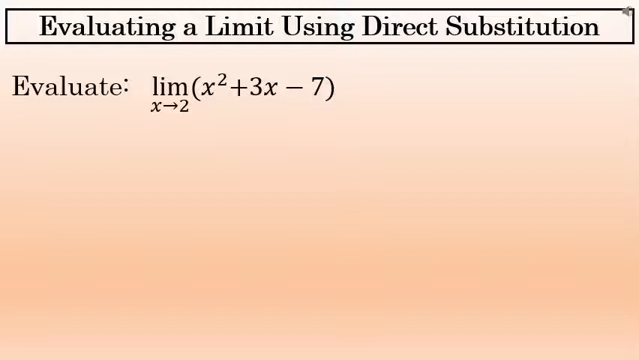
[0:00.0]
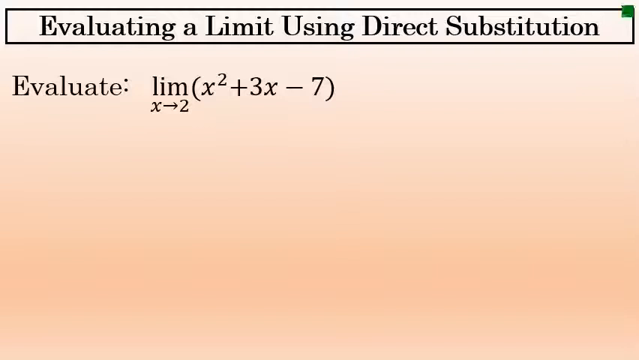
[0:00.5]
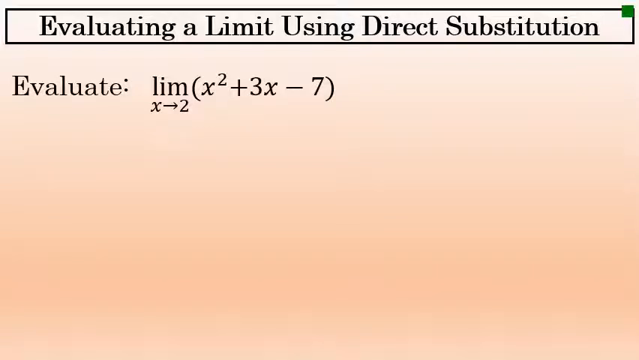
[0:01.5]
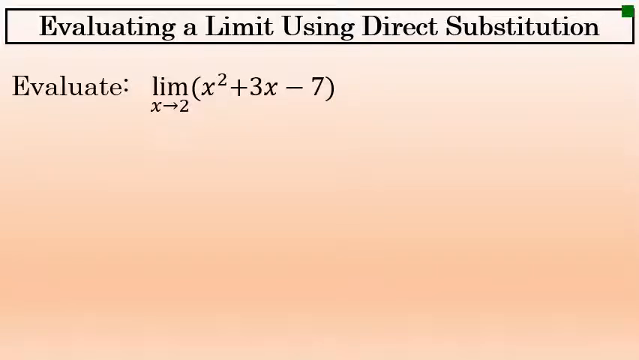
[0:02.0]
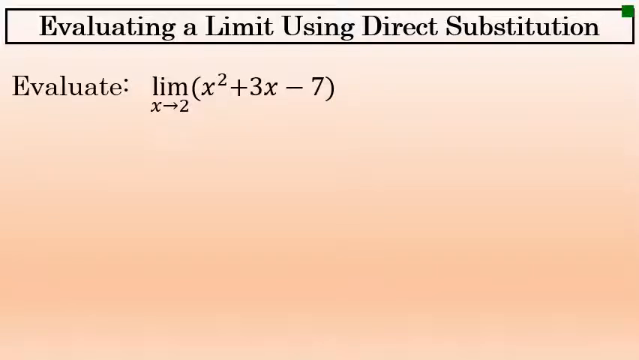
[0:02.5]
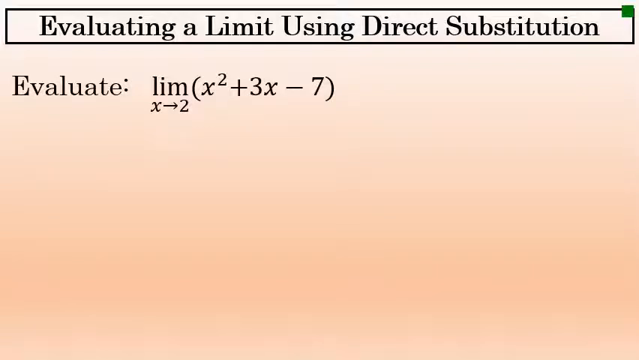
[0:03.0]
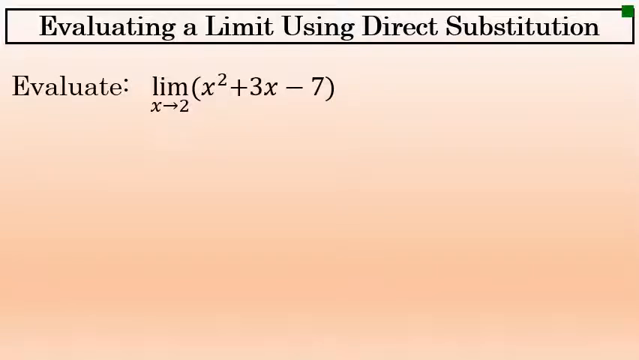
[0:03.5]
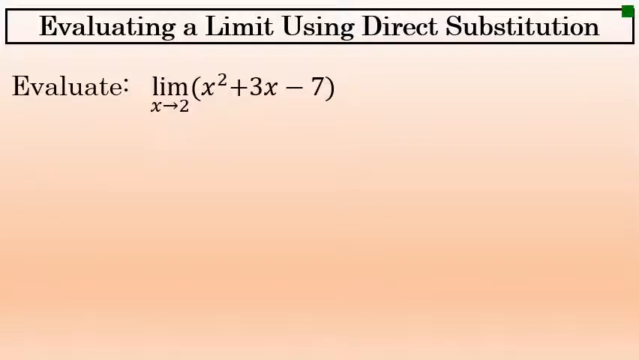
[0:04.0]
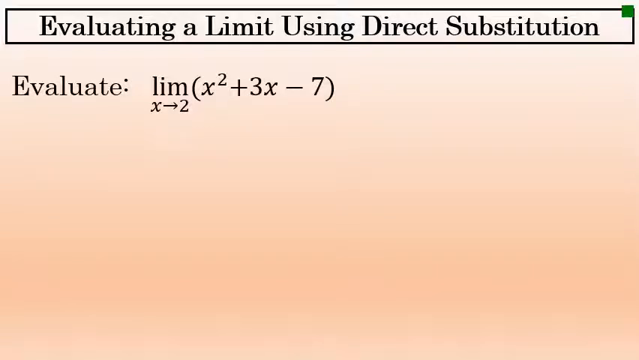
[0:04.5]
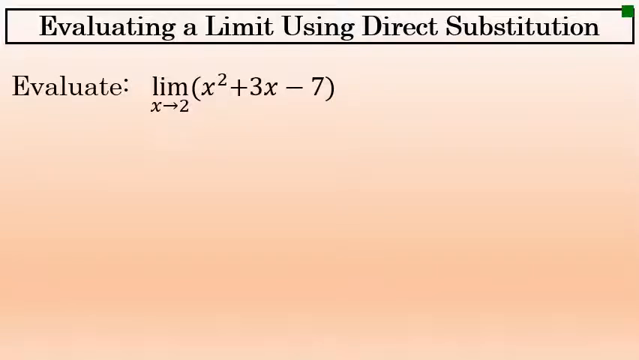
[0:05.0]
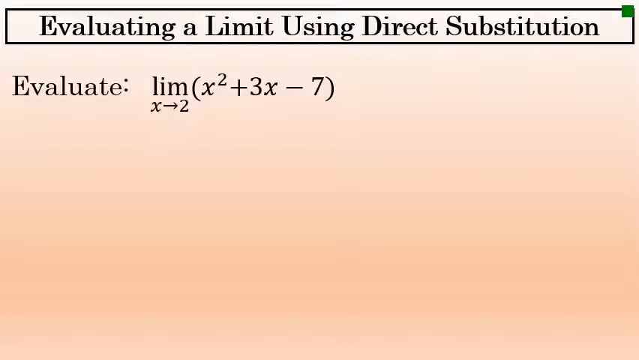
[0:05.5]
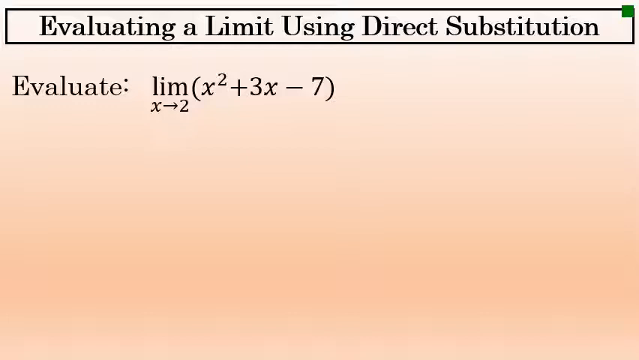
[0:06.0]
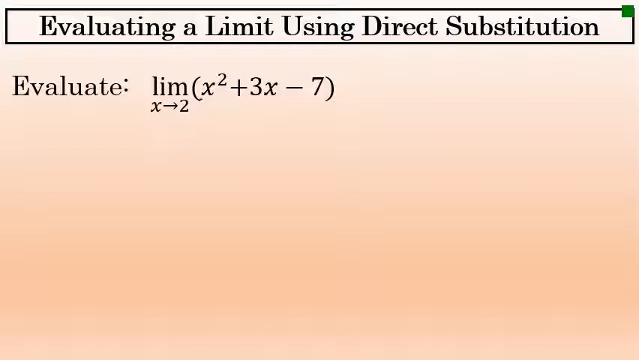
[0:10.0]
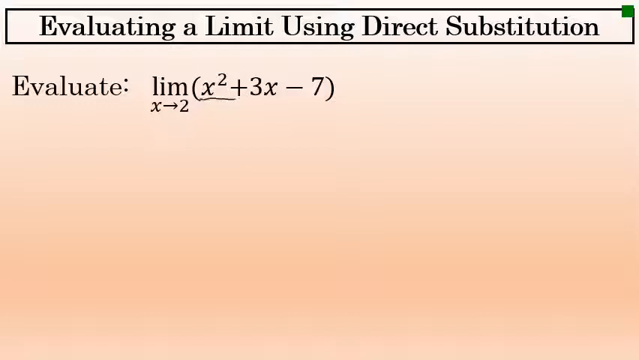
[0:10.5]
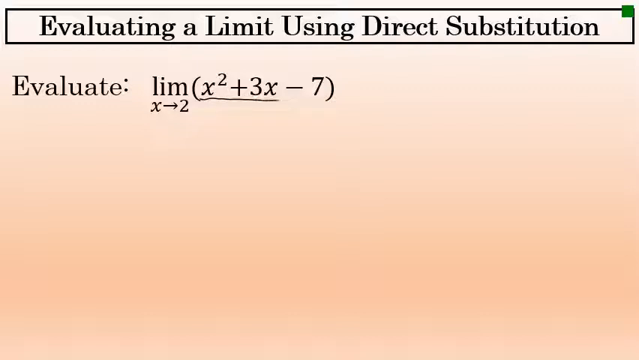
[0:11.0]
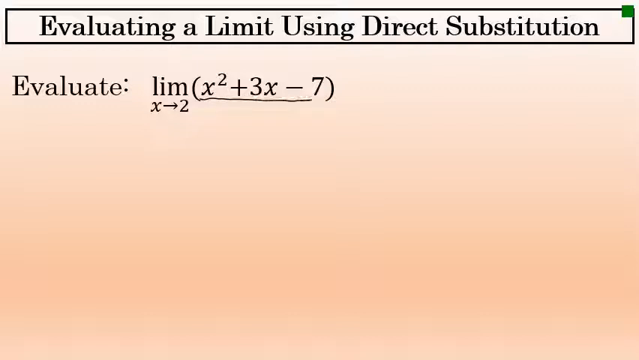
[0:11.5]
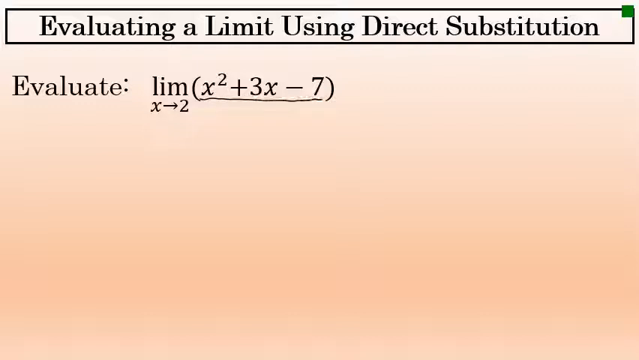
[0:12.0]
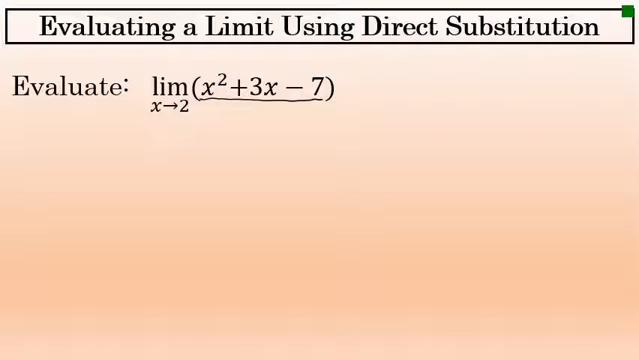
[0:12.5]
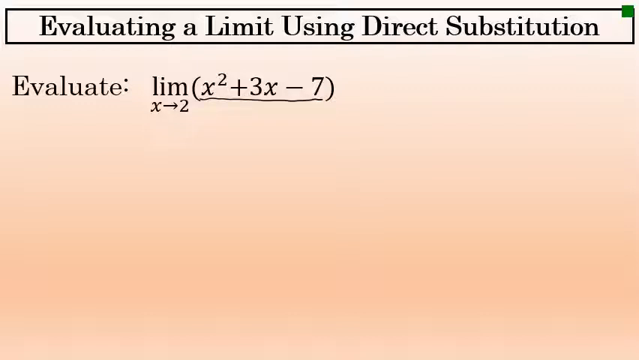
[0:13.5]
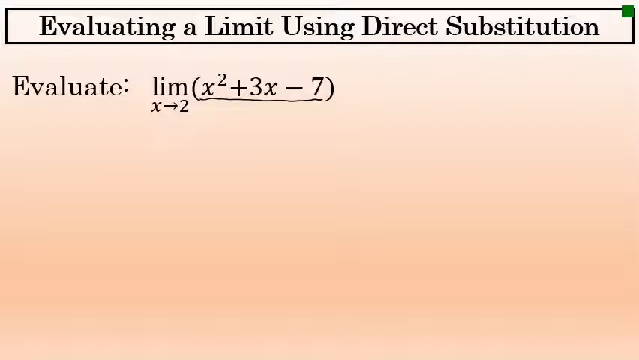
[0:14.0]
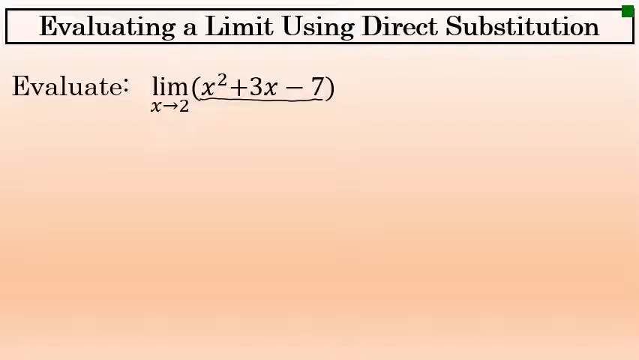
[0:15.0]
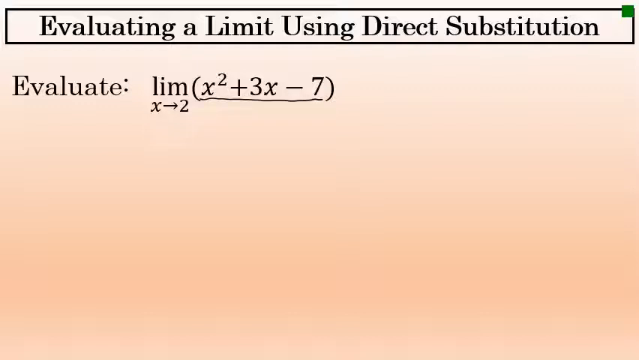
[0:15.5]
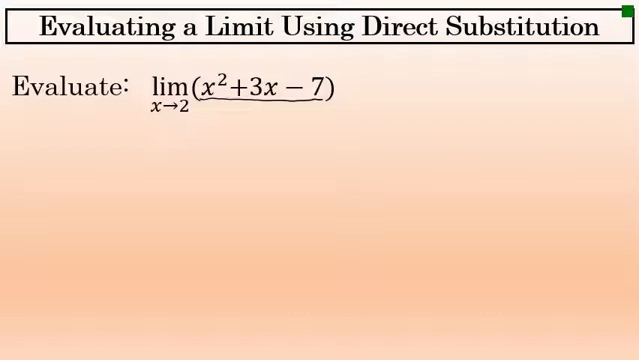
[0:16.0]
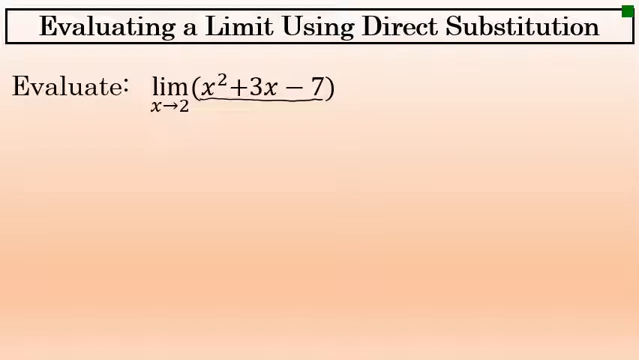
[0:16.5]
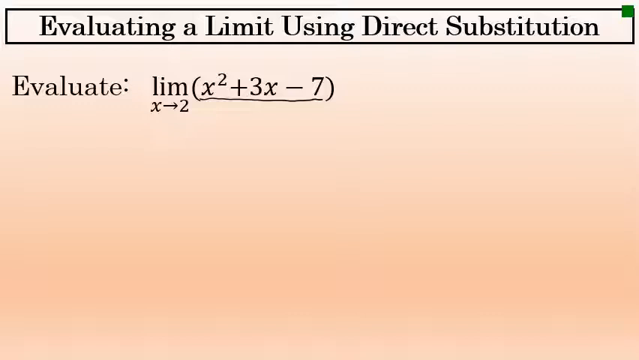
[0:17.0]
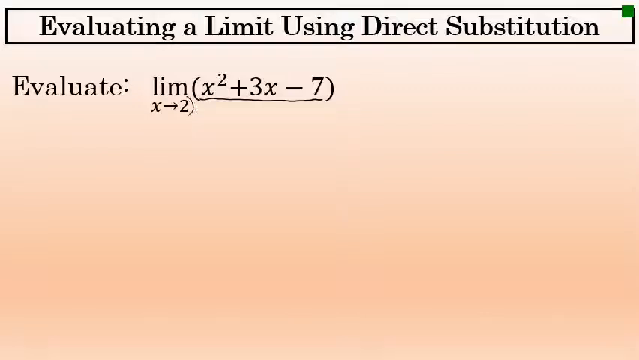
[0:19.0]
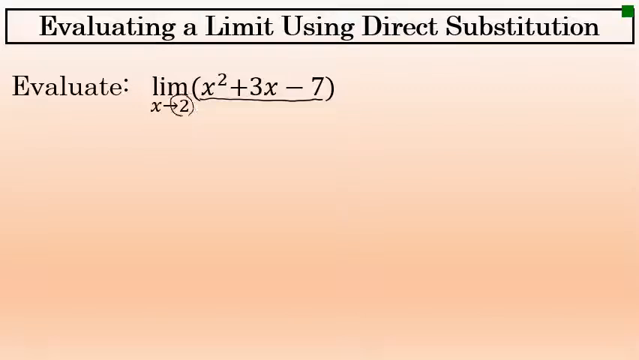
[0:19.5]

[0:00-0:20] At the top of the page, the text "evaluating a limit using direct substitution" is written in a box, running from the left side to the end of the top. Below it is written "evaluate lim[x2 + 3x - 7]", with an x and an arrow just slightly below the limit. In the top corner of the screen, a smaller green box can be seen. A light underlines [x2 + 3x - 7] at the bottom, and a circle appears on a 2 at the bottom. The words run from the left side at the top toward the right, while the evaluate line runs from the left side to the center of the page. The page background is a light pinkish or light orange color.